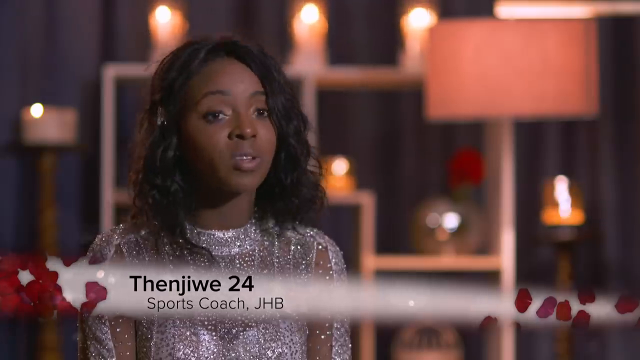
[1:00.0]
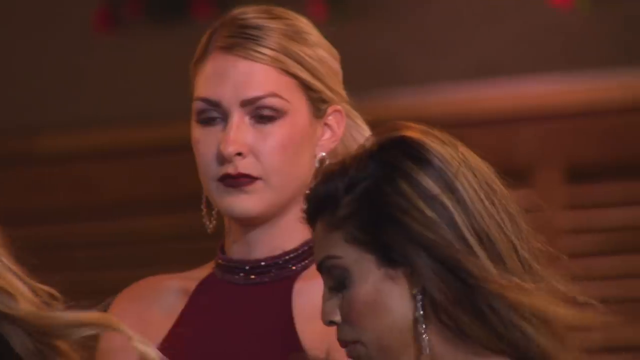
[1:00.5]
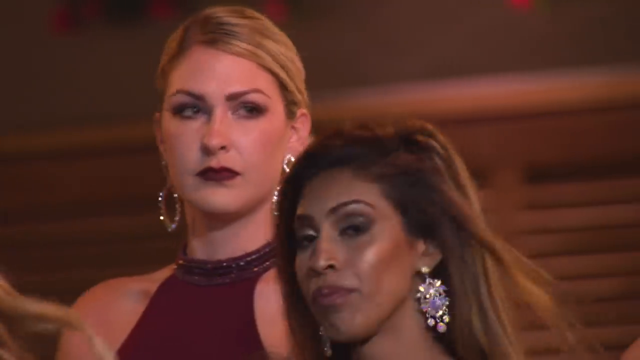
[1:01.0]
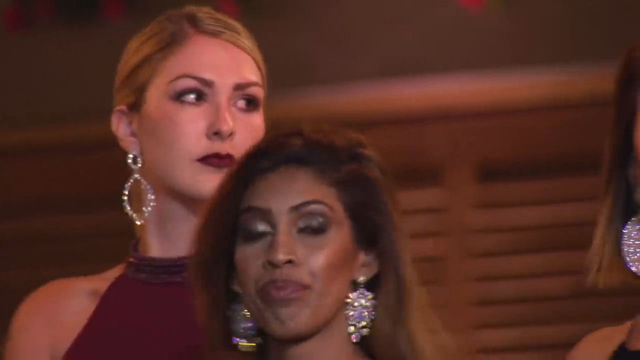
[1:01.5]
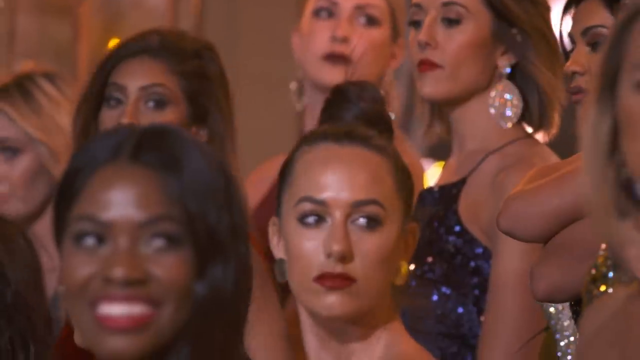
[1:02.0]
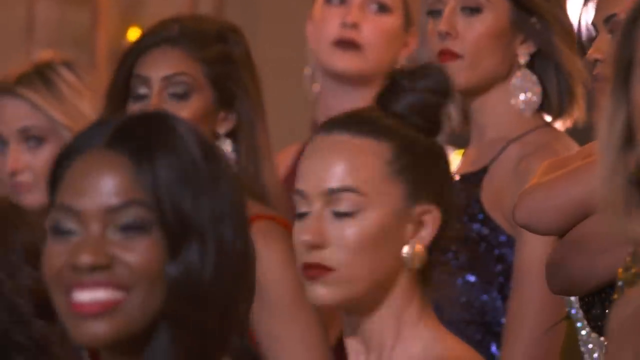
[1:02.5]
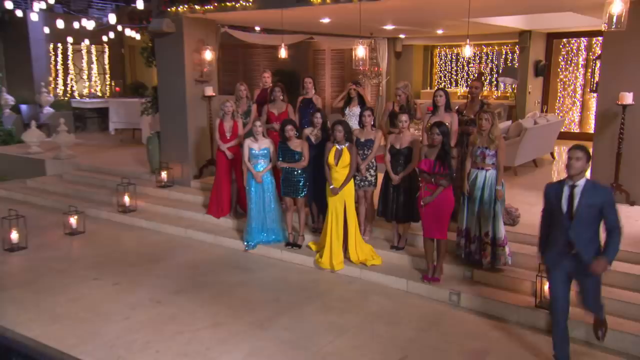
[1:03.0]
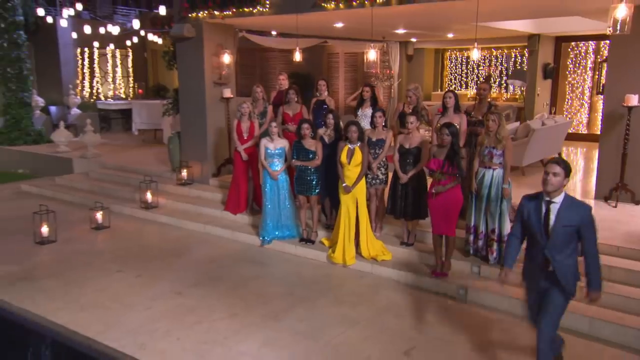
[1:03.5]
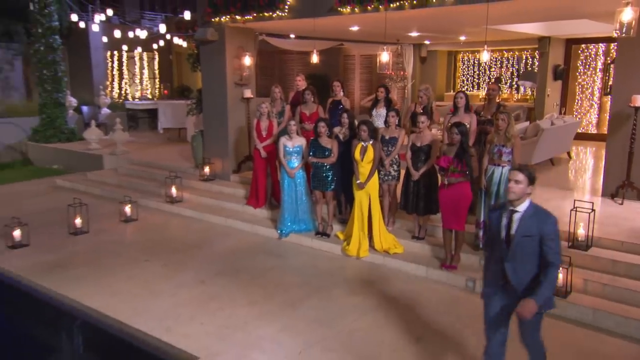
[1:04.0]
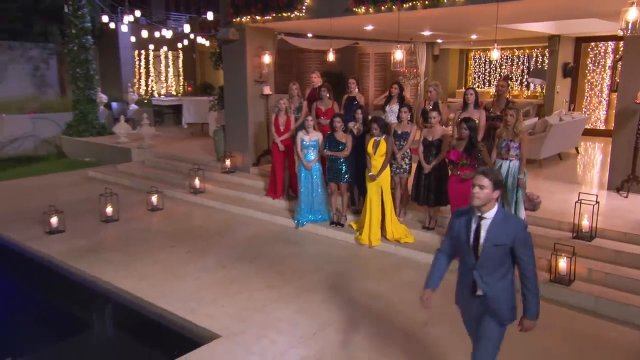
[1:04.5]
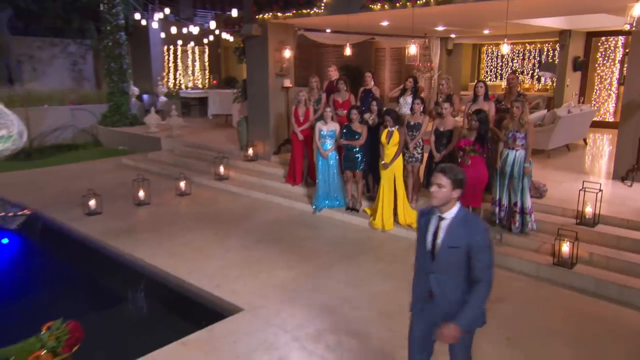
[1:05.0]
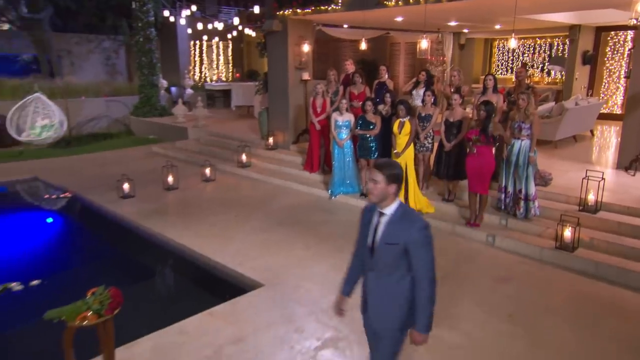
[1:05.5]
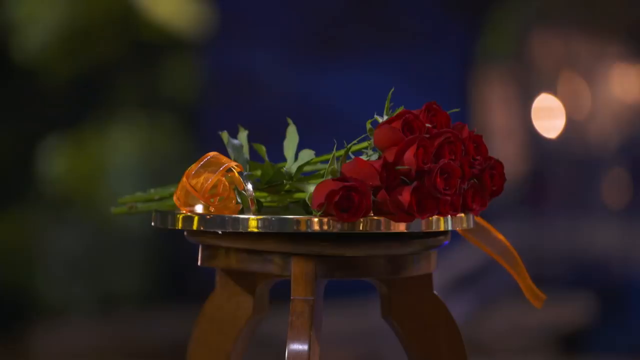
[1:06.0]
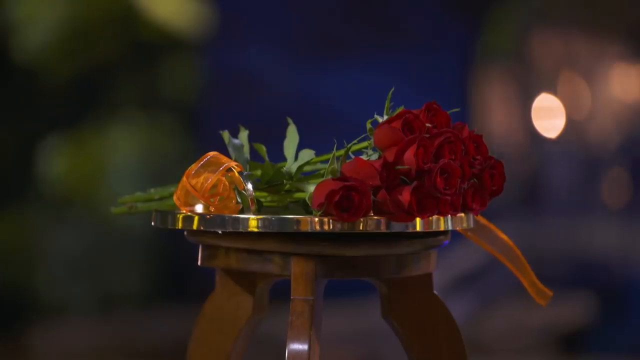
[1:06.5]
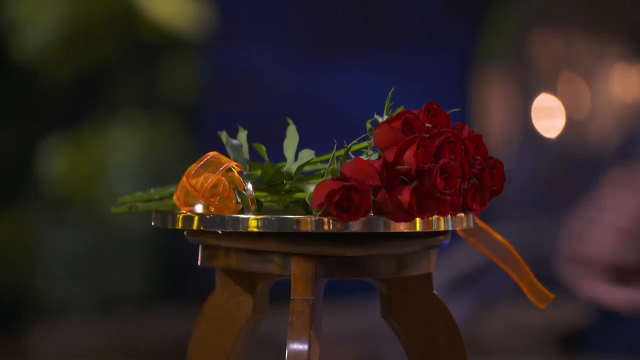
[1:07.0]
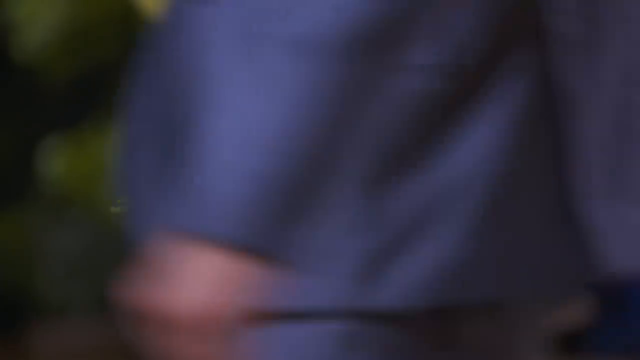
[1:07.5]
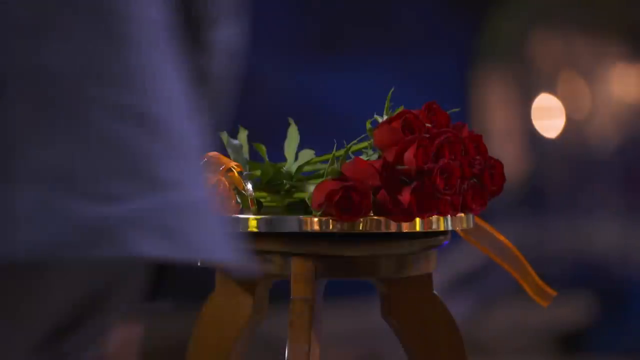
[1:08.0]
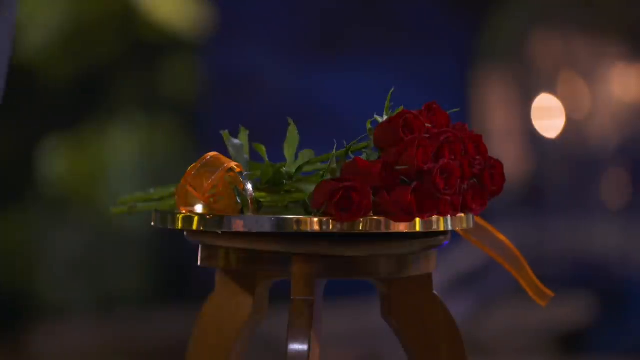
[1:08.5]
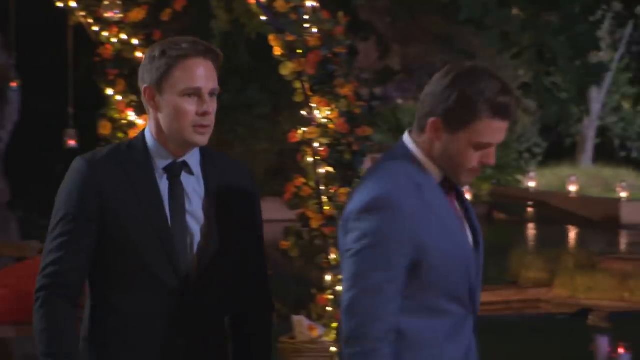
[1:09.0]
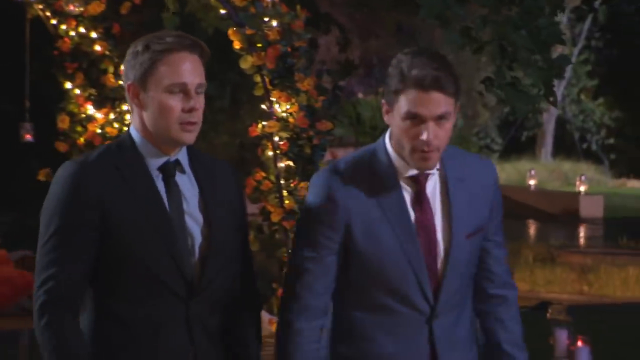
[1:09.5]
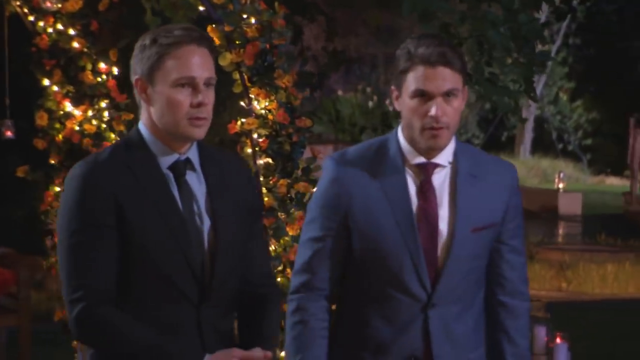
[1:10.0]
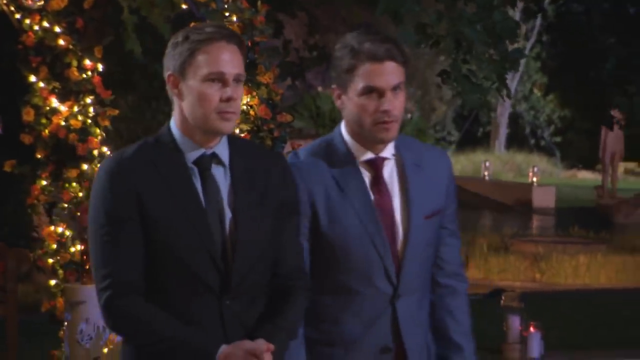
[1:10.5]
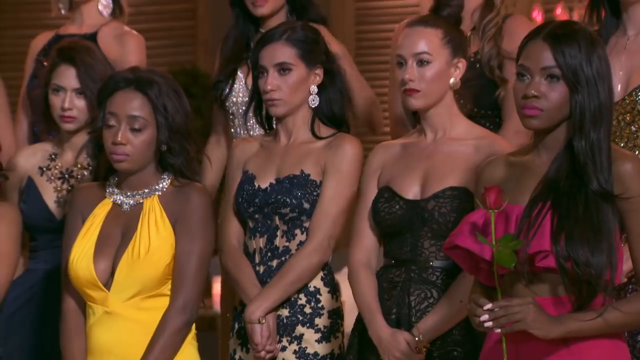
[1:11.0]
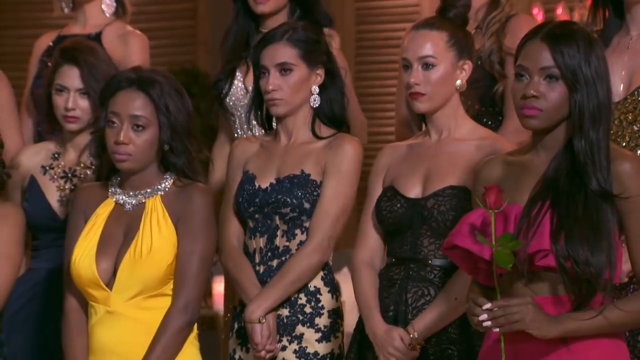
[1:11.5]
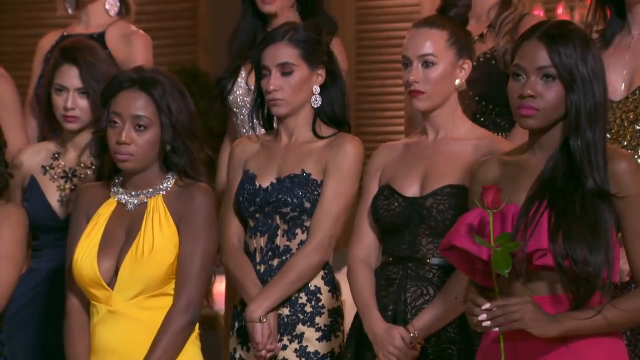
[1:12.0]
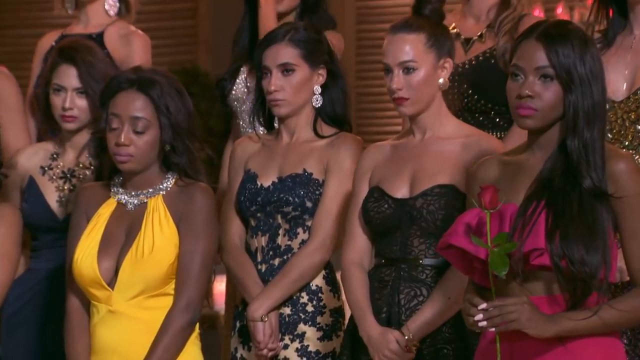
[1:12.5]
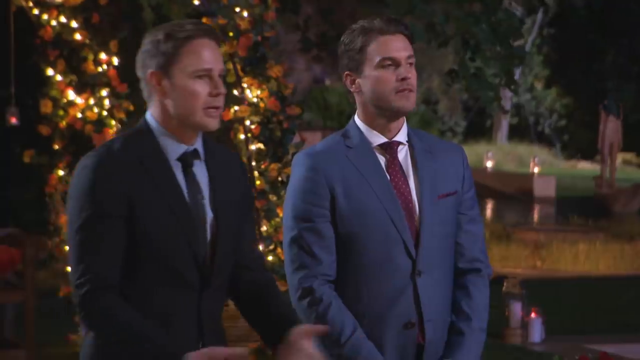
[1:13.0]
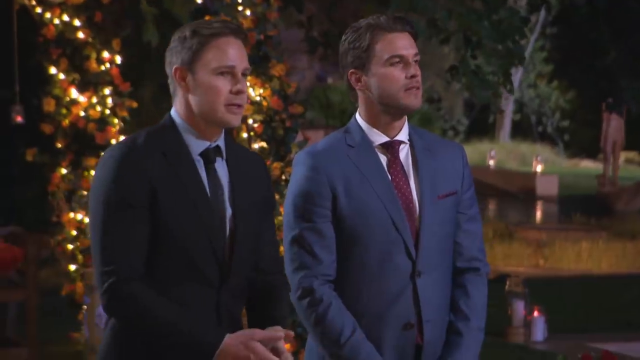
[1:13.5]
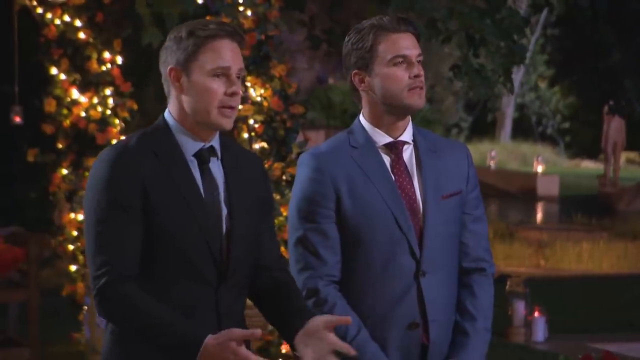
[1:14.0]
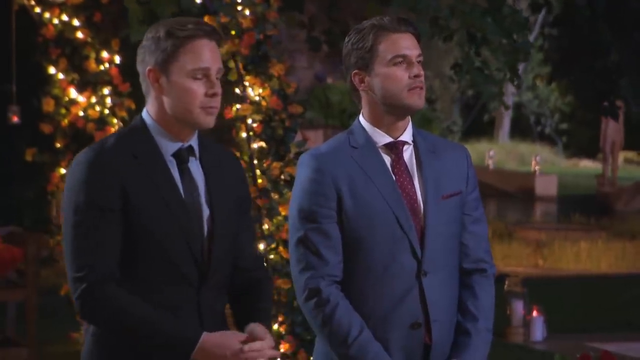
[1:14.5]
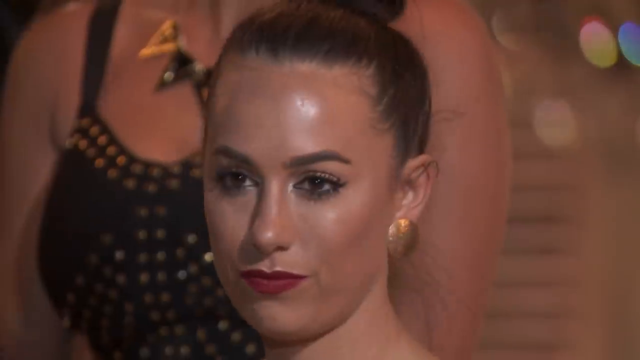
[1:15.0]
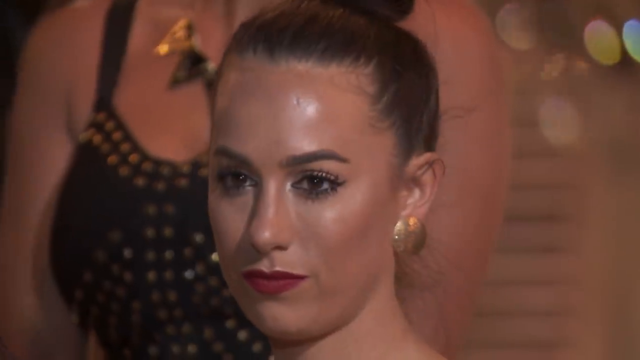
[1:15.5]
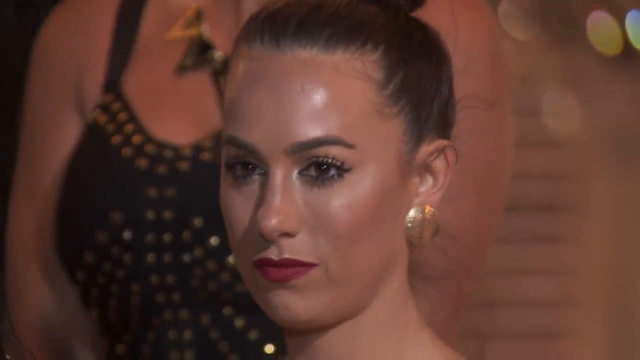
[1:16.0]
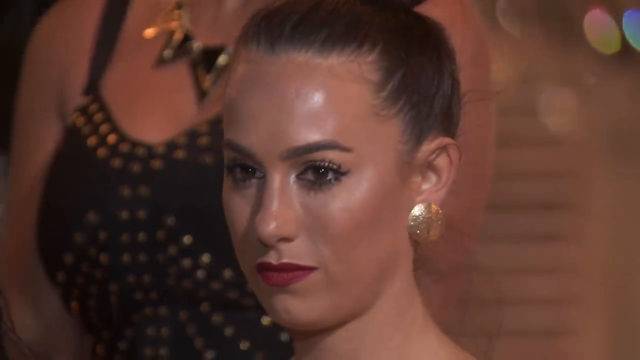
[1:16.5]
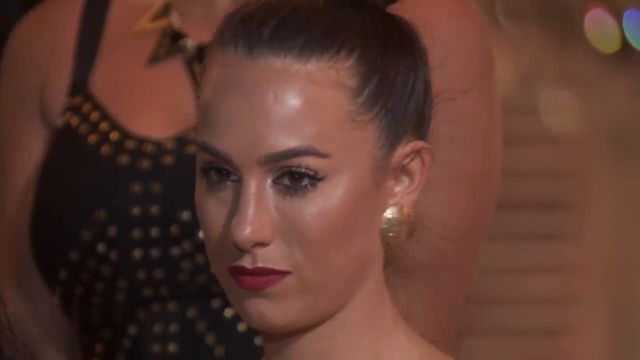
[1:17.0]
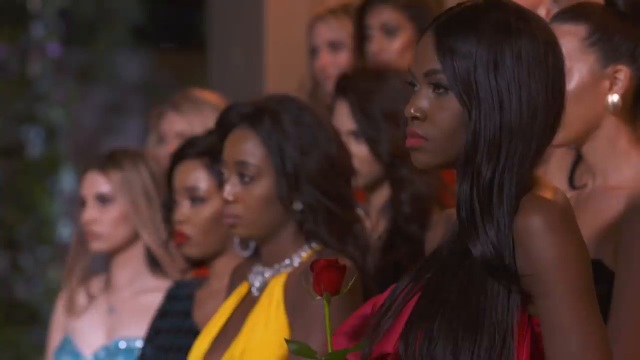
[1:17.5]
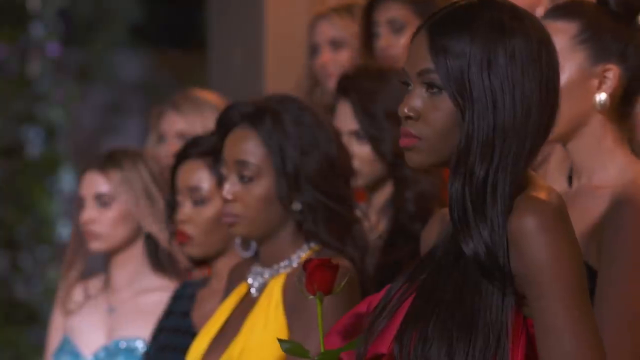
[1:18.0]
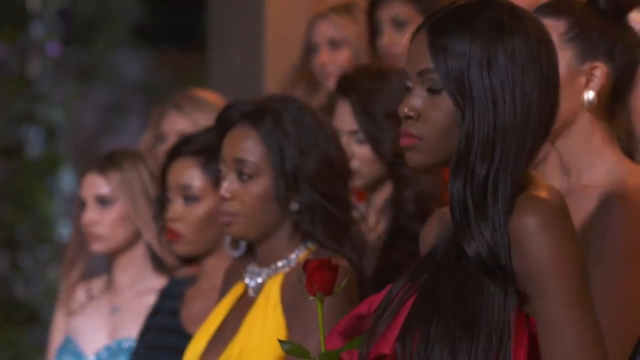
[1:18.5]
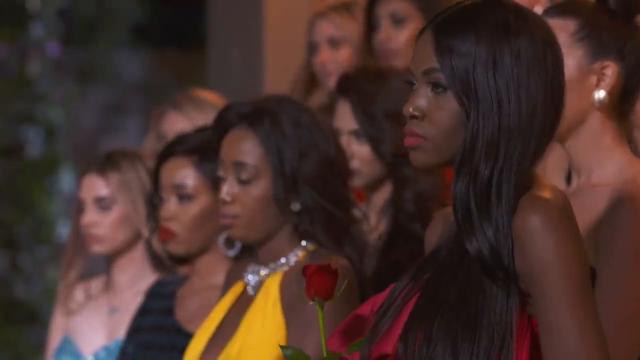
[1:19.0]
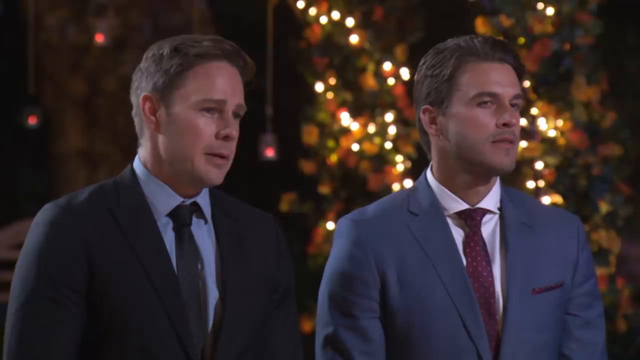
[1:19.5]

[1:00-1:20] A black woman with long, slightly curly black hair wears a silver dress with diamantes and long sleeves. She talks facing the right-hand side of the camera rather than looking directly at it. Text at the bottom of the screen gives her name as "Tenji" with "24" and underneath "sports coach, JHB" on a white background. Behind her about seven lit candles can be seen: five on top of a white wooden cabinet and one on either side of it. The scene quickly changes to focus on a white woman in a dark dress with bright, shiny diamante earrings that have a circle on them; her blonde hair is tied back and she looks very angry. In front of her are other women in formal dresses, and the camera quickly moves to the rest of the women in the dimly lit room, about 20 of them.